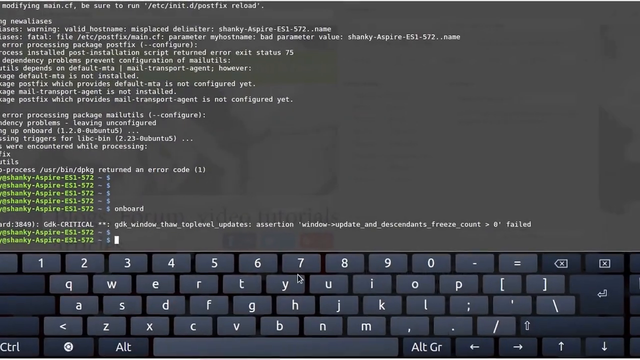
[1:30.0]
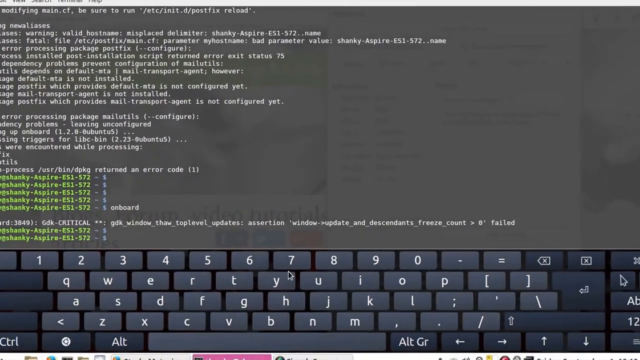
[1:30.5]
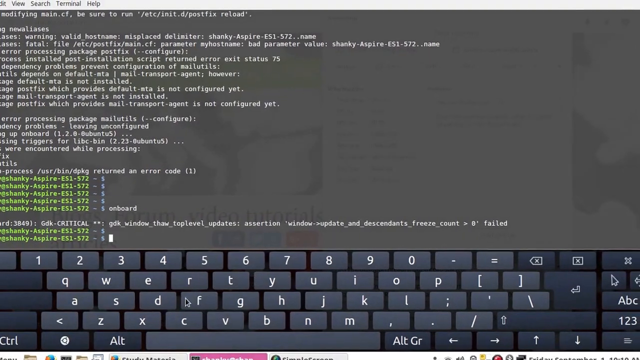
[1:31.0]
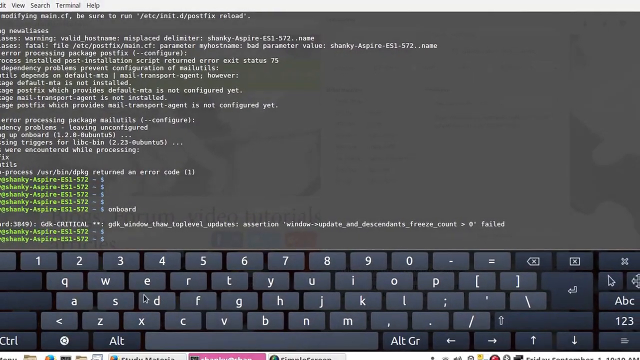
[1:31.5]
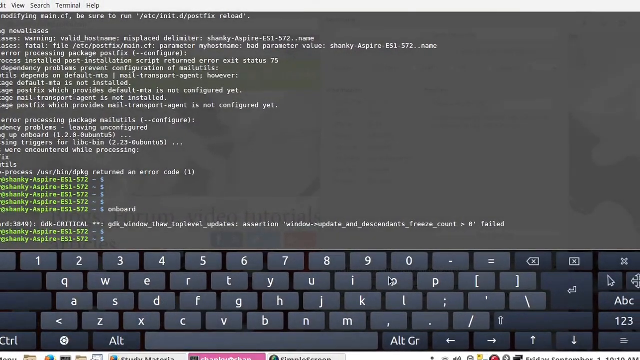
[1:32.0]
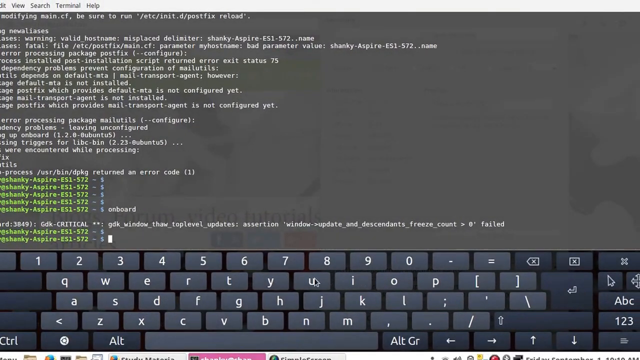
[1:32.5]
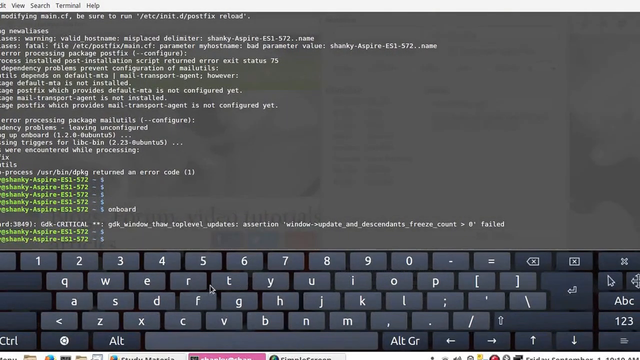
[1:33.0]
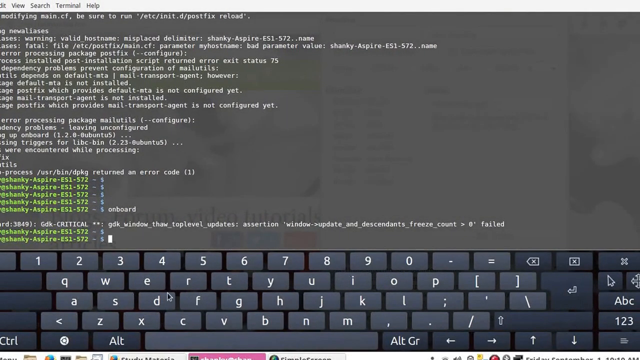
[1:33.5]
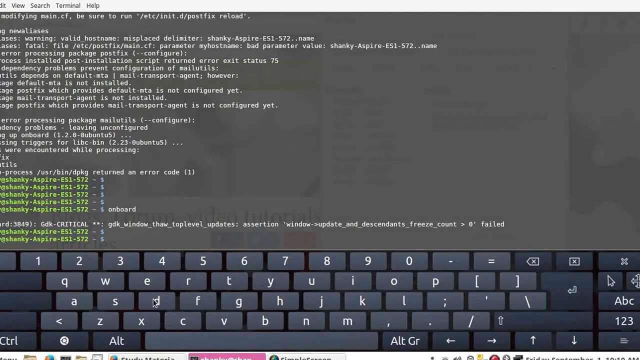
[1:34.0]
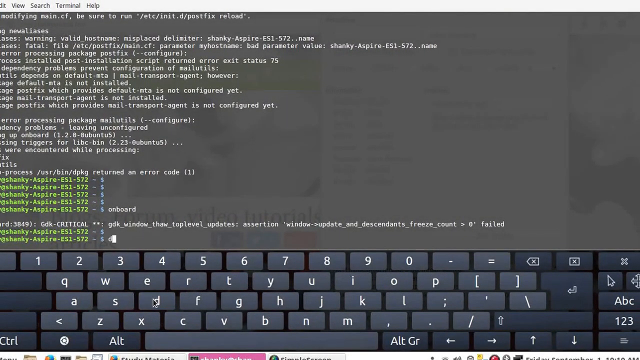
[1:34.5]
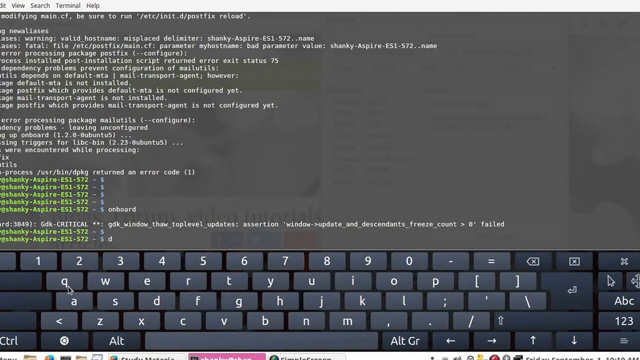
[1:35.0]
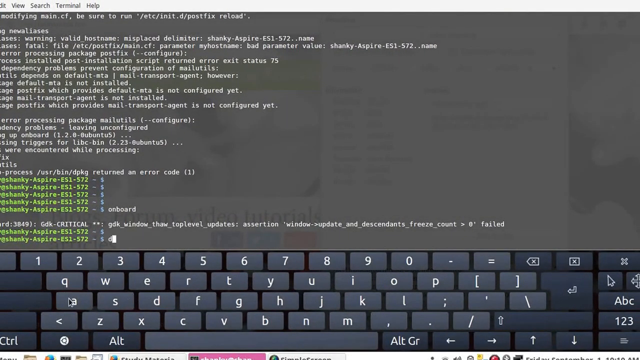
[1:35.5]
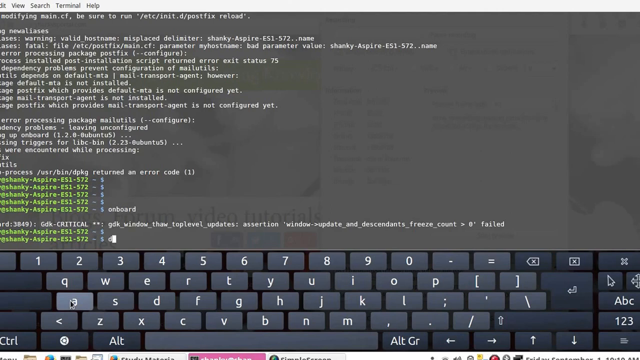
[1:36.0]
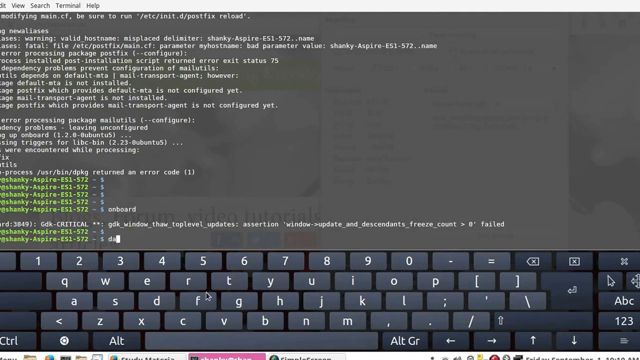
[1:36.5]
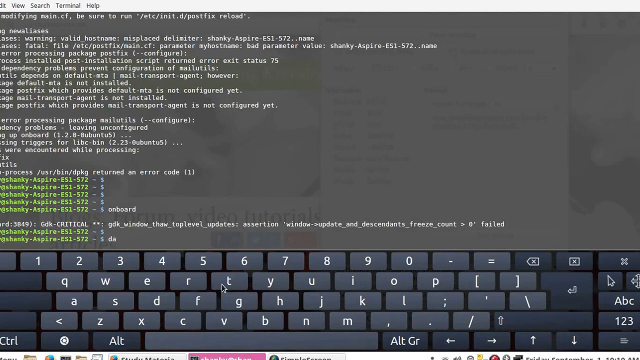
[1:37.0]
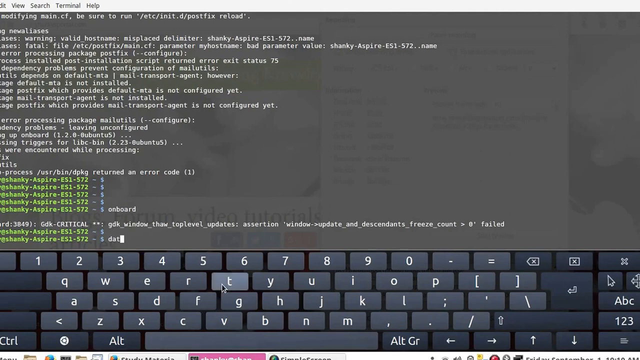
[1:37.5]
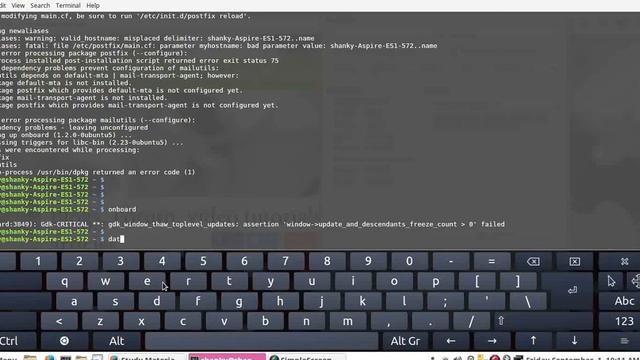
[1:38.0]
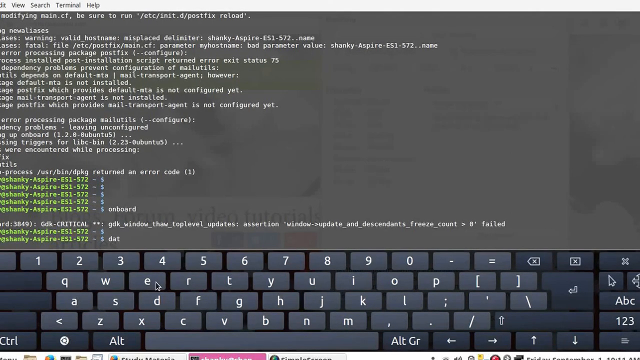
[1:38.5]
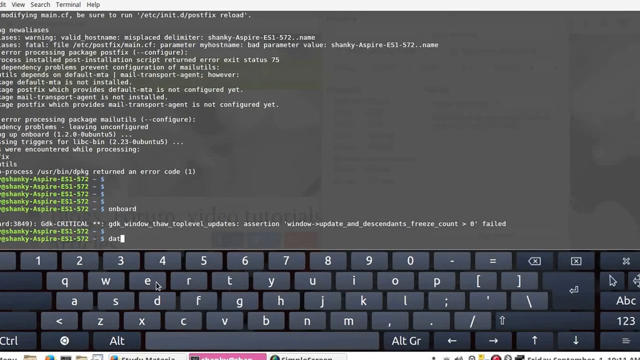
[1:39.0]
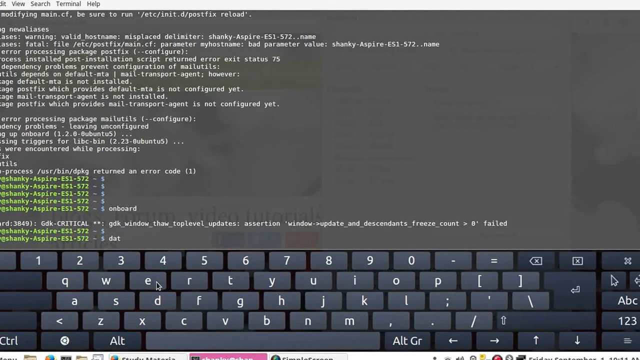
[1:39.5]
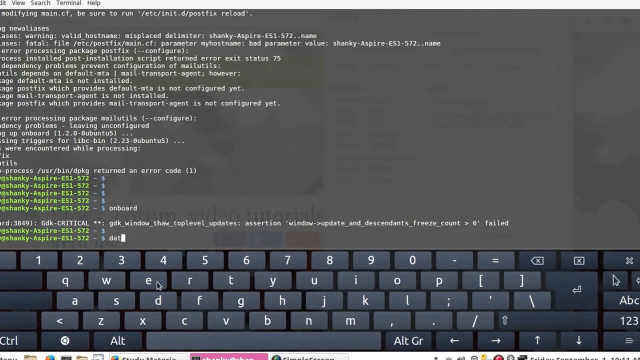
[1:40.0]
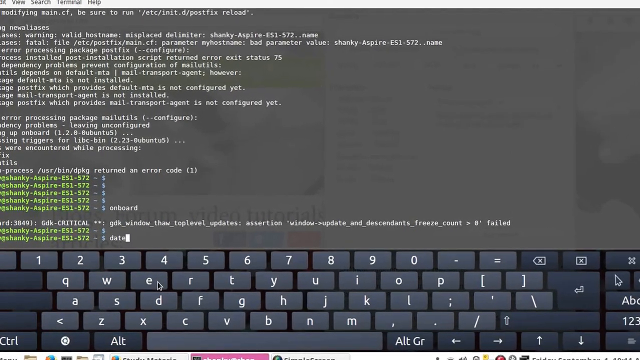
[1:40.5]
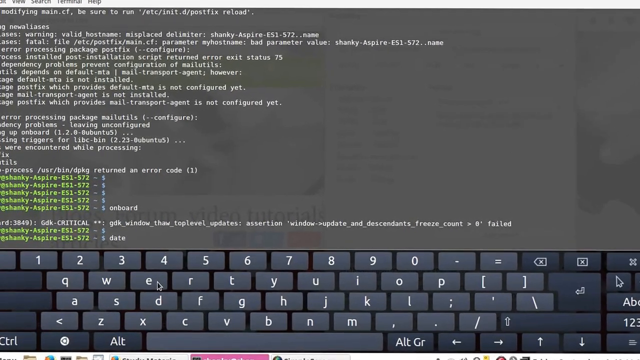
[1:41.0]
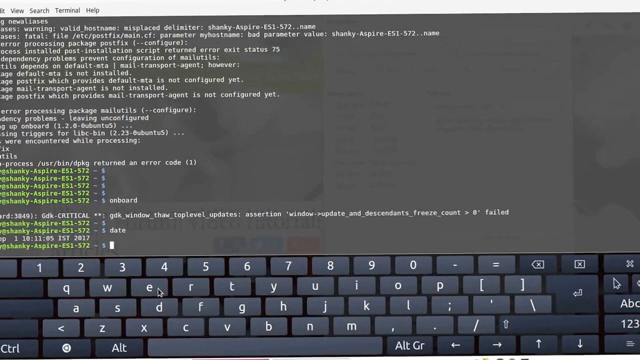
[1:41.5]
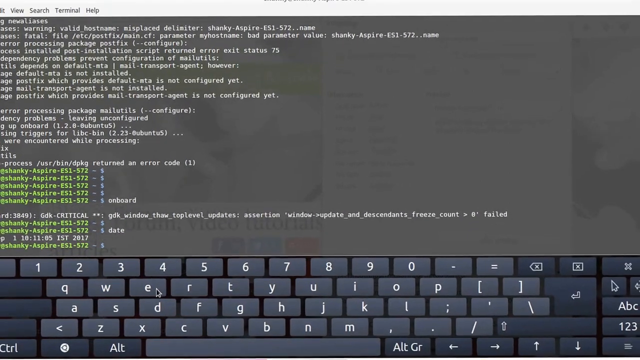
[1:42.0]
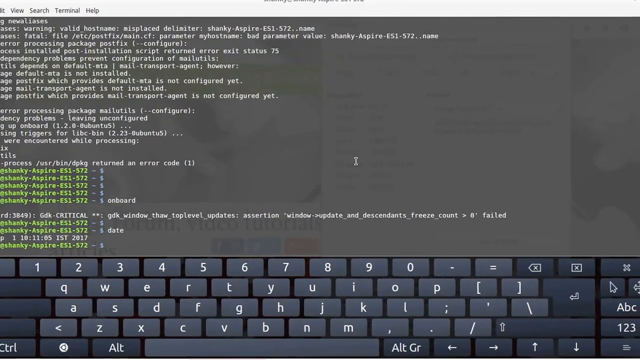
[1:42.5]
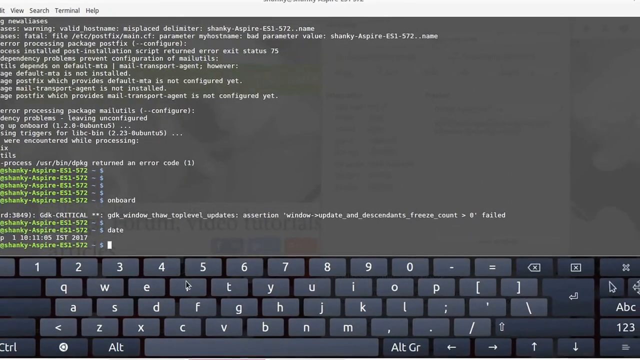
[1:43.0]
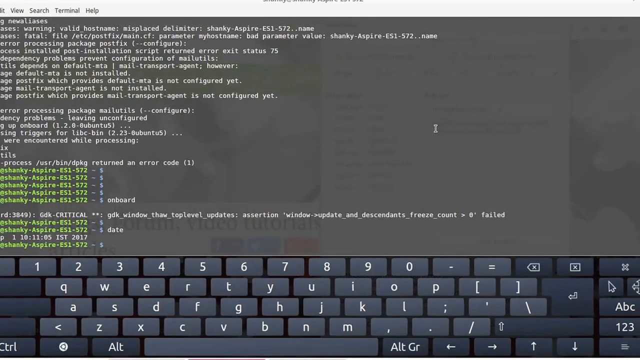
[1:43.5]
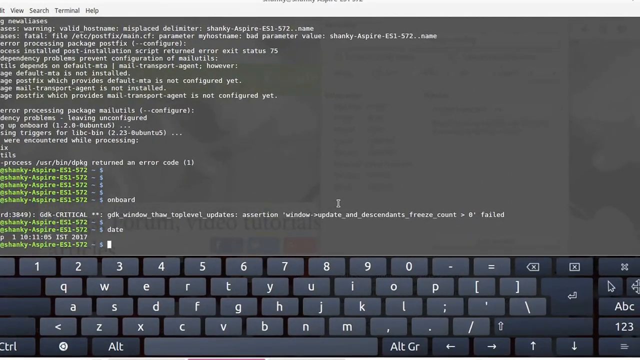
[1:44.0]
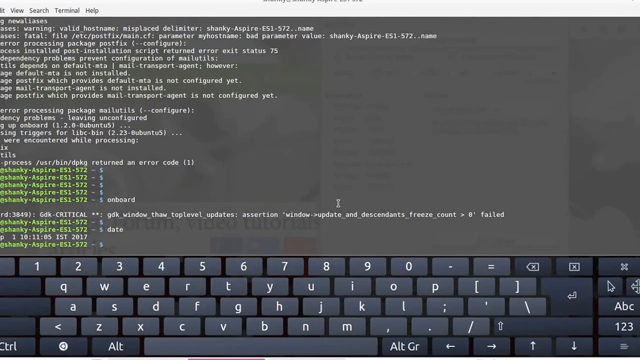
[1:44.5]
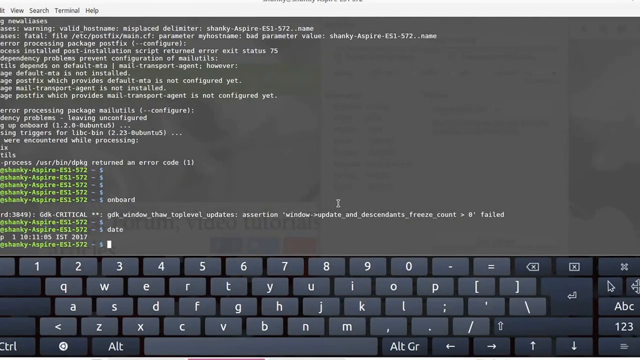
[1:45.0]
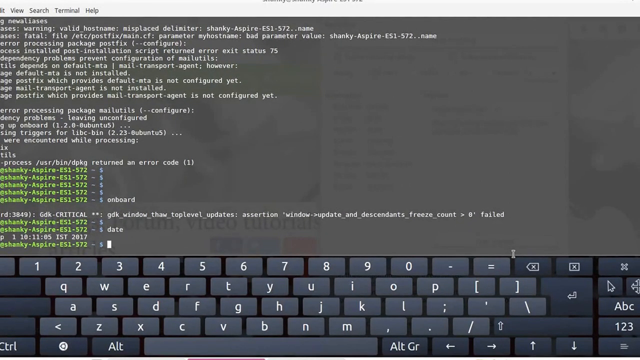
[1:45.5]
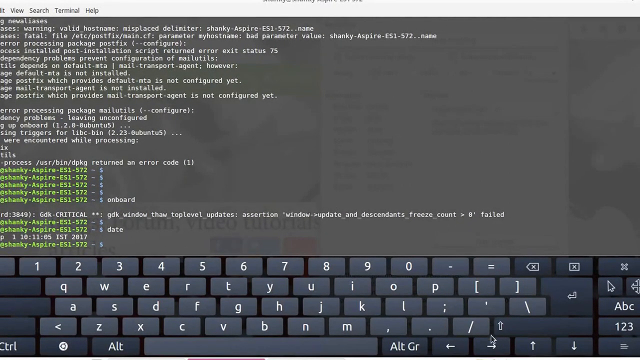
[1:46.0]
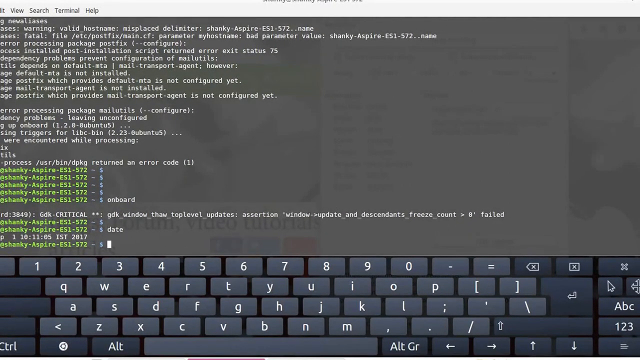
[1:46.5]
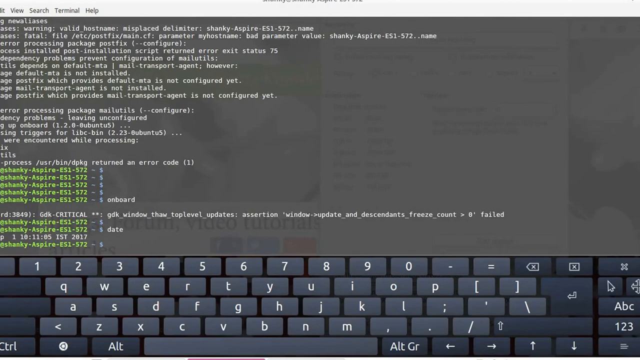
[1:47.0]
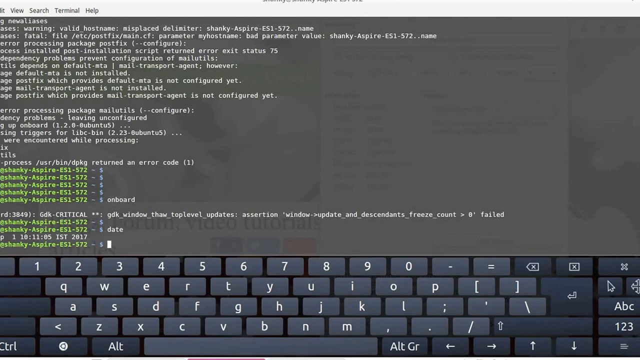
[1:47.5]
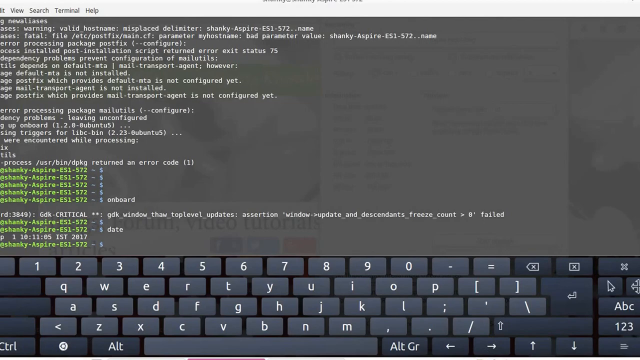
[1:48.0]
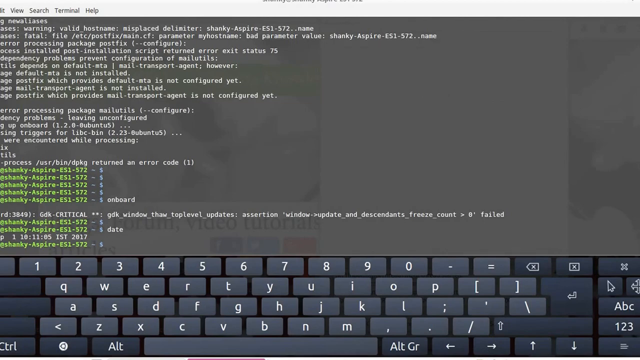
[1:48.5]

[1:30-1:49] The background of the window is gunmetal gray, with a keyboard in the bottom quarter of the screen. White text runs down the left-hand side of the page and then runs into the green text repeating "at Shanky Aspire ES1-572-$" until it says "On Board." There is illegible text, and then two more lines of "Shanky-Aspire-ES1-572-$." The screen backs out a little, and a prompt flashes. The mouse hovers over keys: the D, A, T keys, the E key, the D-A-T-E keys. The mouse moves about. At the top left of the screen, white text reads "modifying main.cf.be sure to run," followed by a series of illegible prompts. After a space, further text runs down the left side, including "warning," "valid hostname," "misplaced," "delineator," and "shanky-aspire-es1-572...name"; some of the text is illegible. At one point it reads "error processing package," then an illegible word, parentheses, "..configure," and parentheses. There are further prompts in white, some of them illegible.